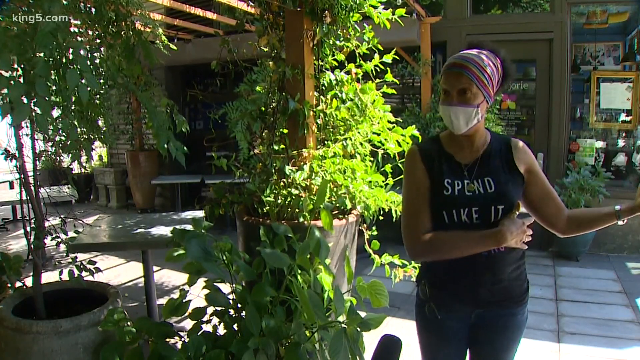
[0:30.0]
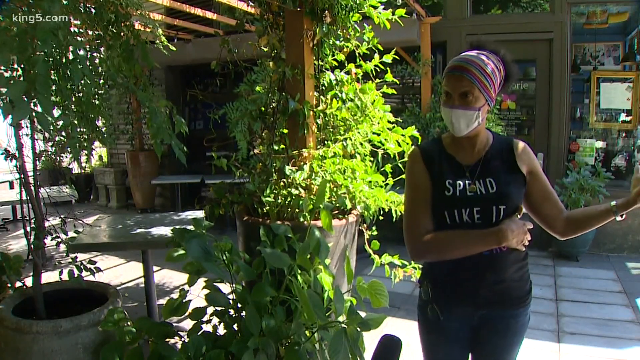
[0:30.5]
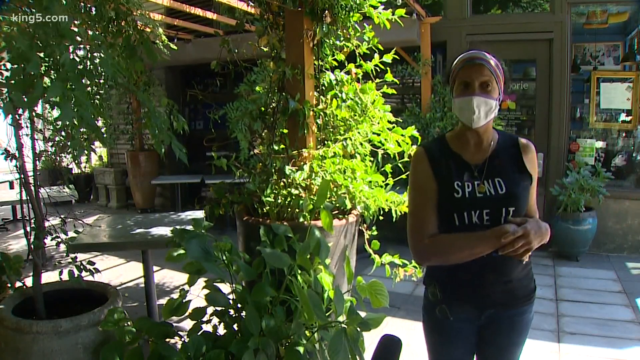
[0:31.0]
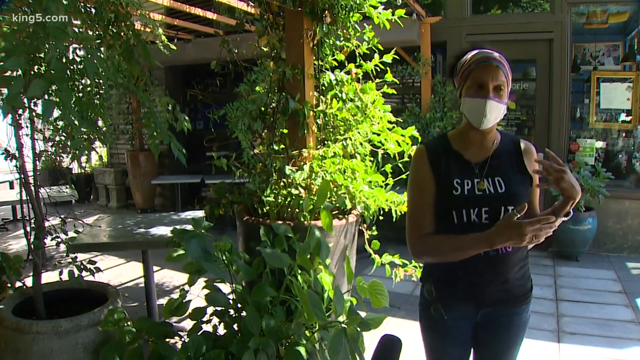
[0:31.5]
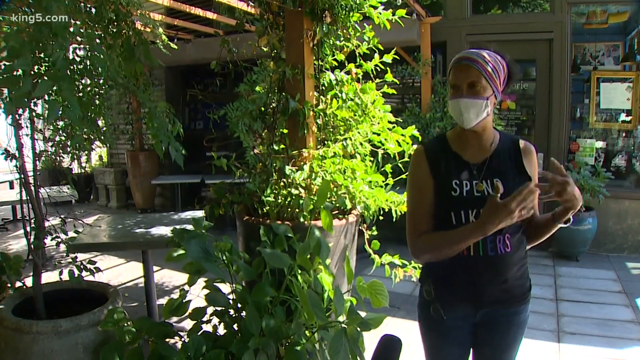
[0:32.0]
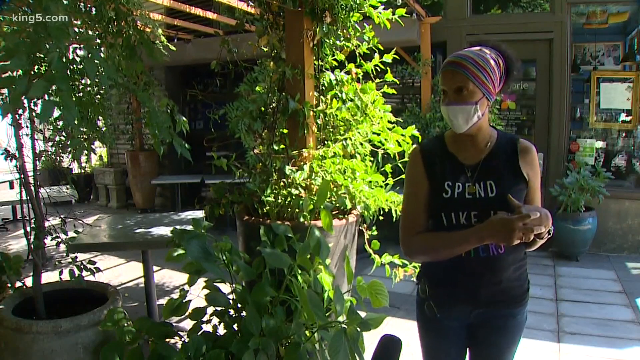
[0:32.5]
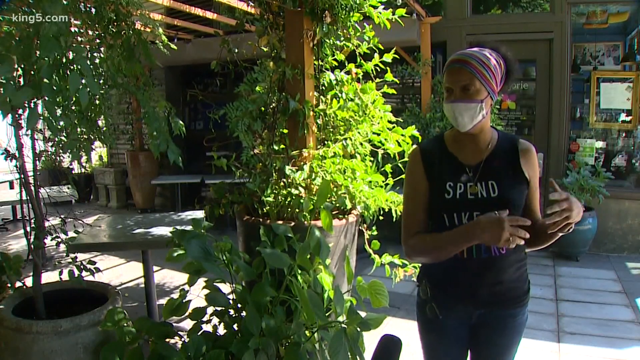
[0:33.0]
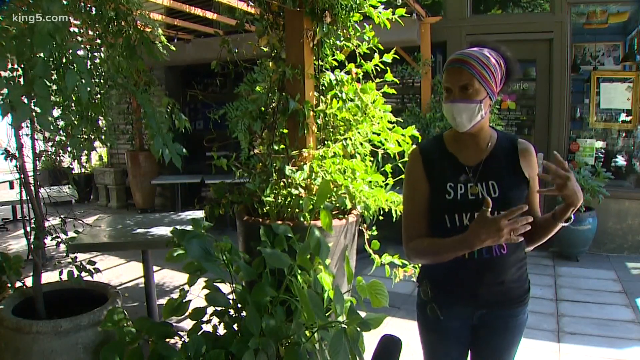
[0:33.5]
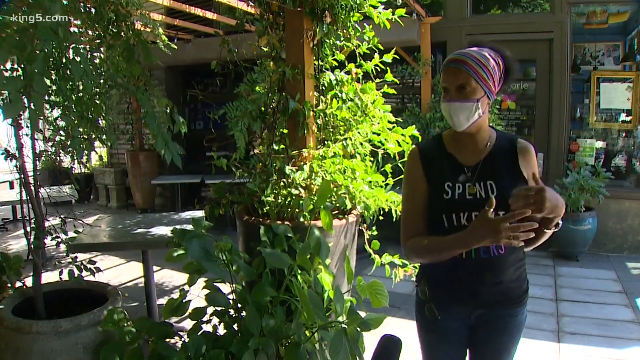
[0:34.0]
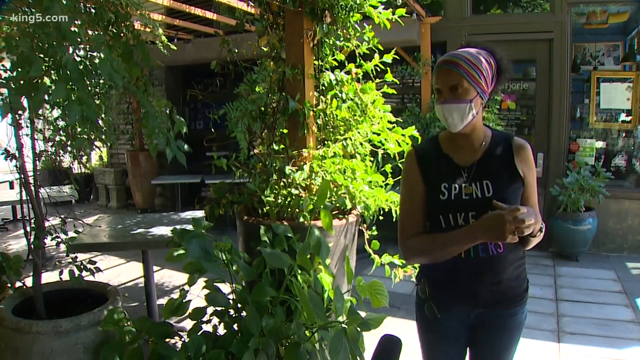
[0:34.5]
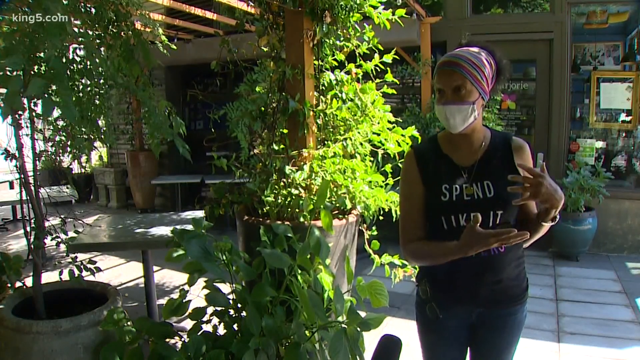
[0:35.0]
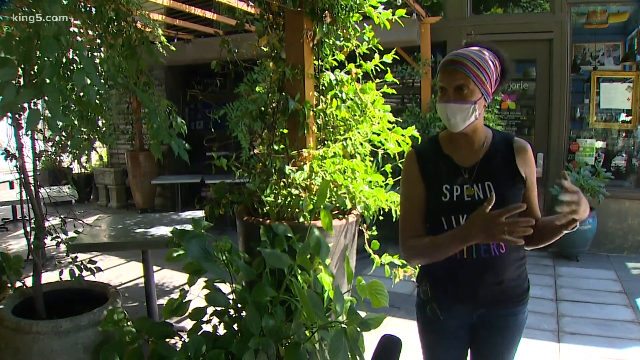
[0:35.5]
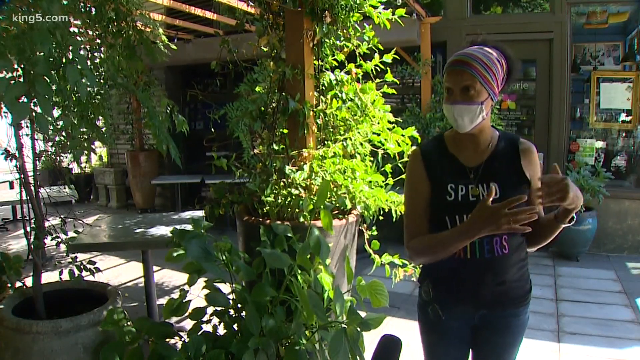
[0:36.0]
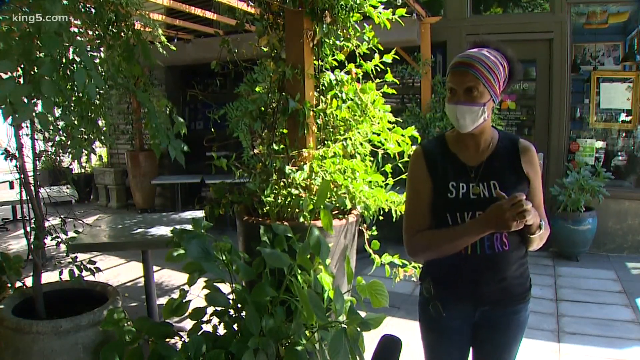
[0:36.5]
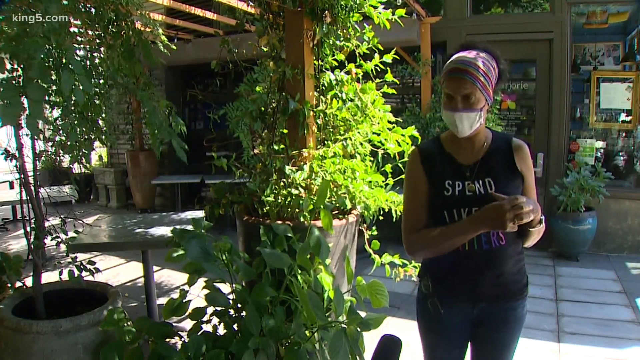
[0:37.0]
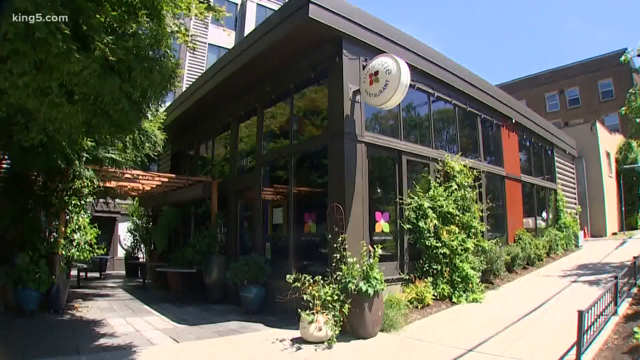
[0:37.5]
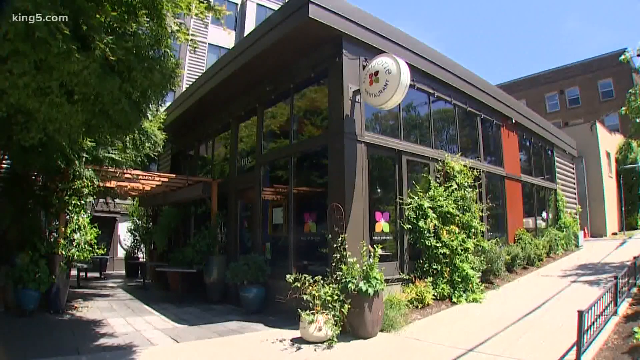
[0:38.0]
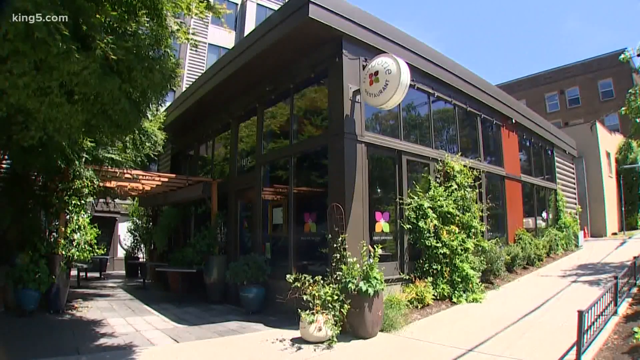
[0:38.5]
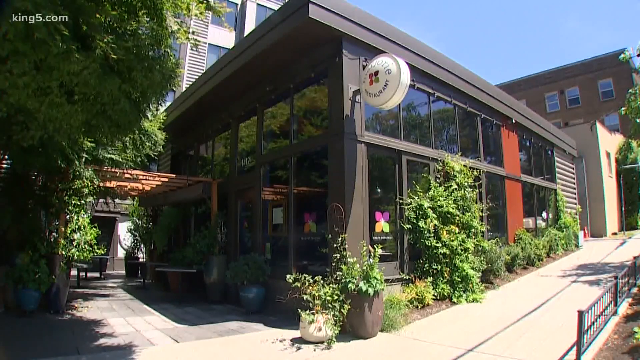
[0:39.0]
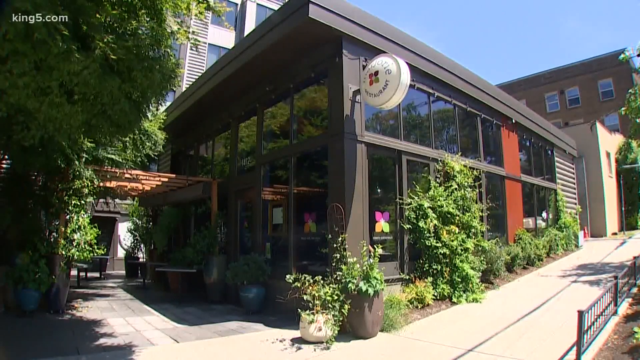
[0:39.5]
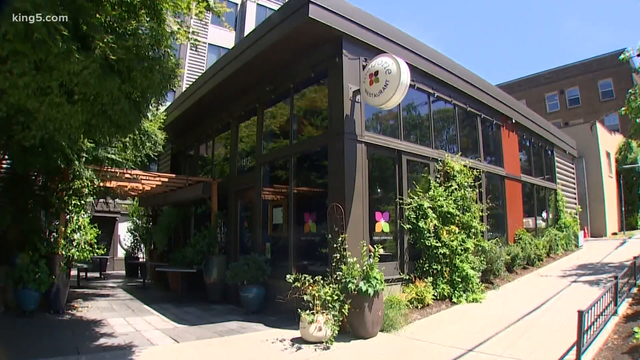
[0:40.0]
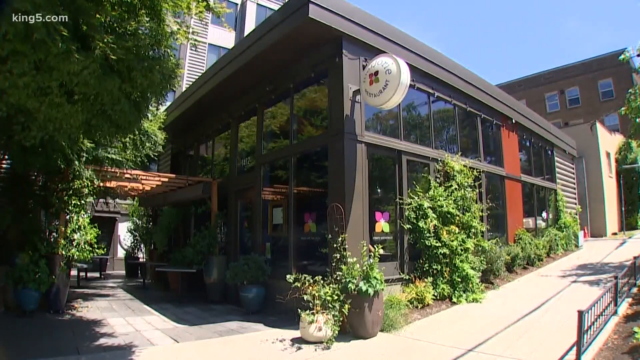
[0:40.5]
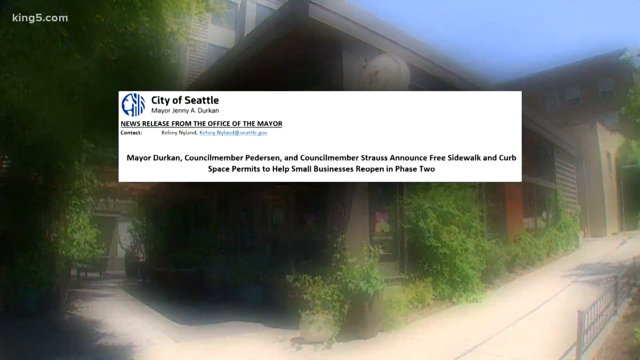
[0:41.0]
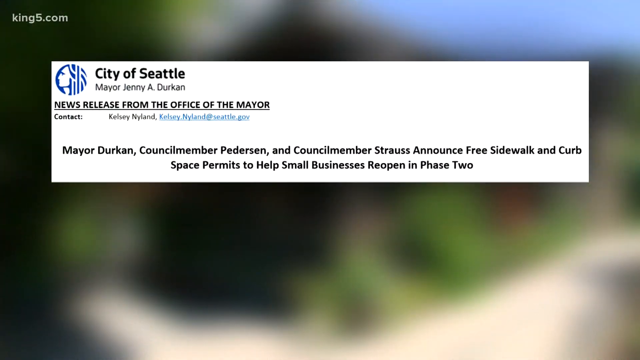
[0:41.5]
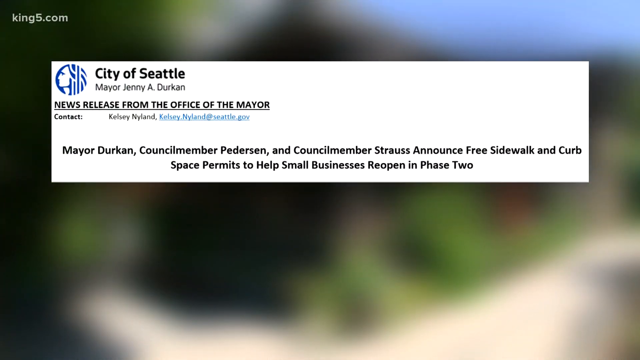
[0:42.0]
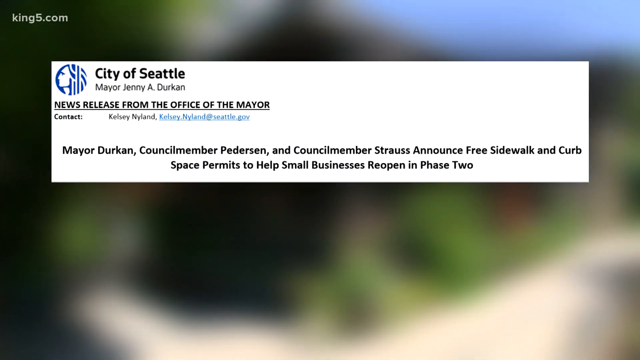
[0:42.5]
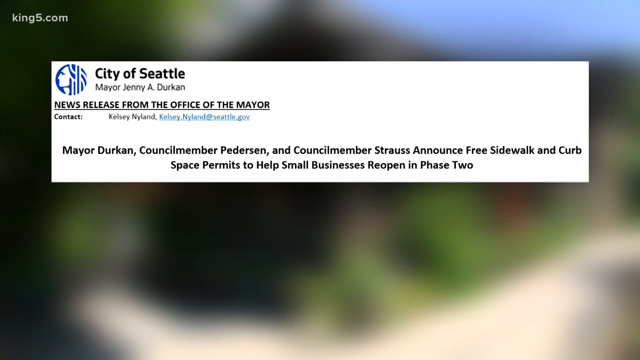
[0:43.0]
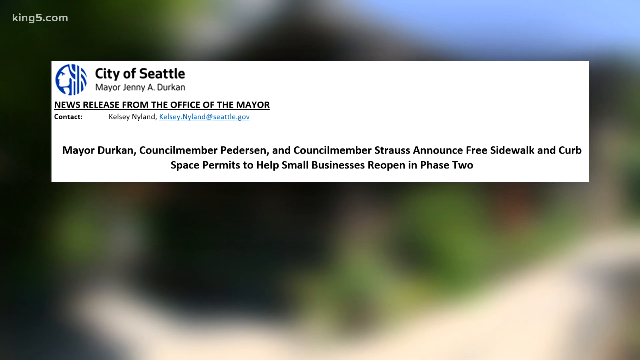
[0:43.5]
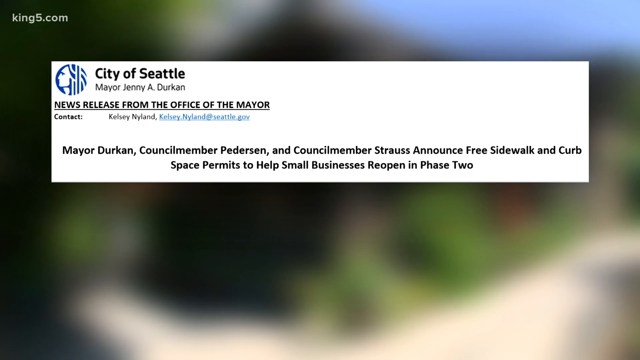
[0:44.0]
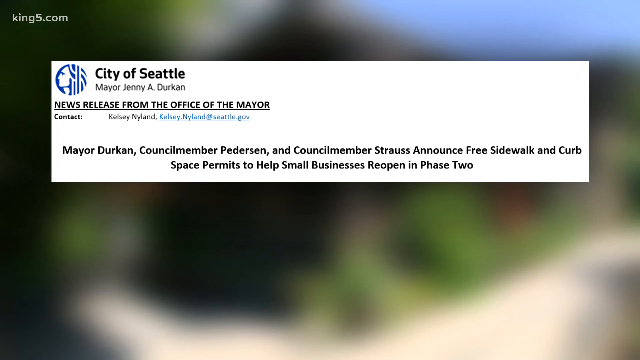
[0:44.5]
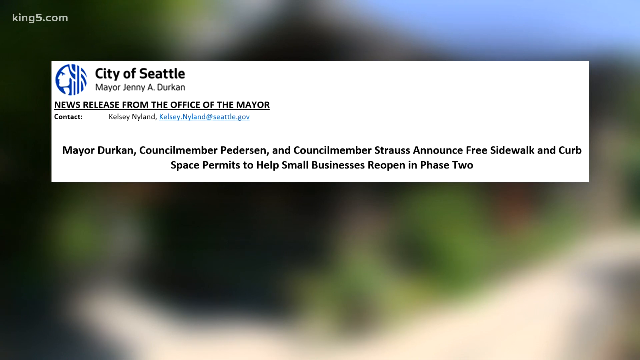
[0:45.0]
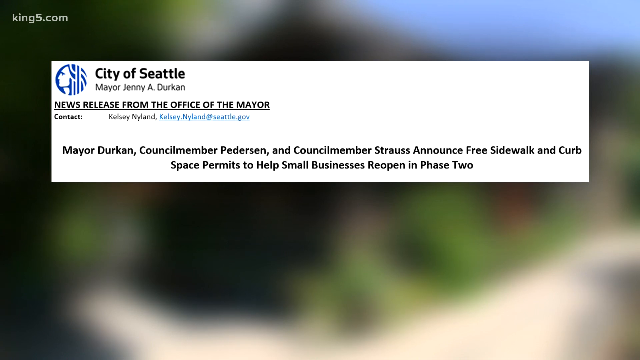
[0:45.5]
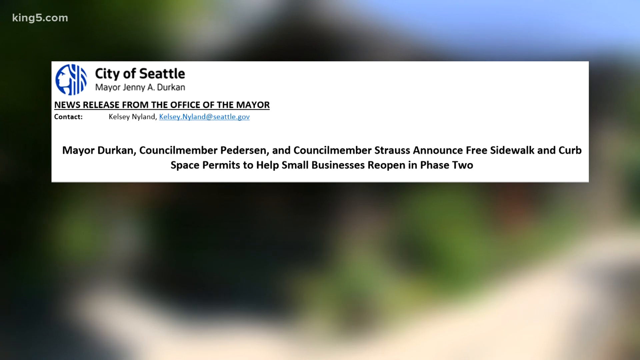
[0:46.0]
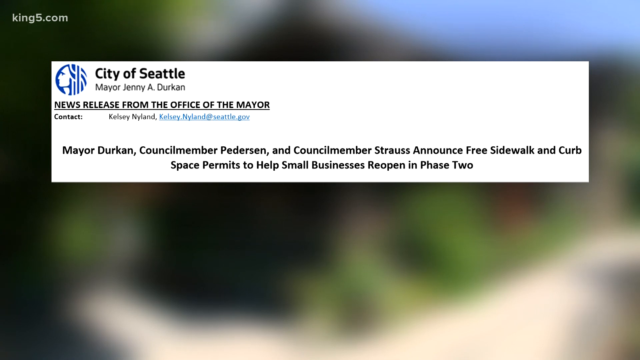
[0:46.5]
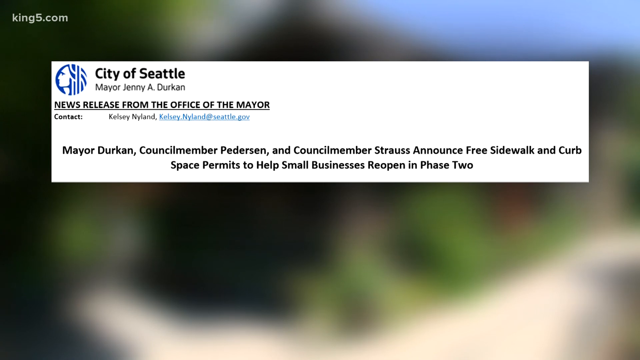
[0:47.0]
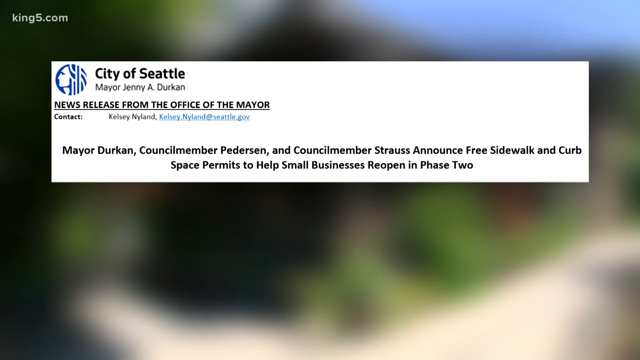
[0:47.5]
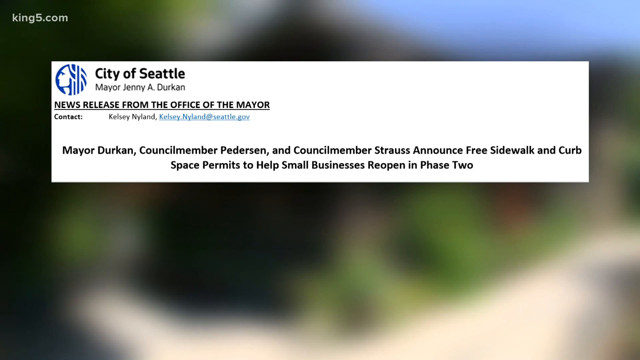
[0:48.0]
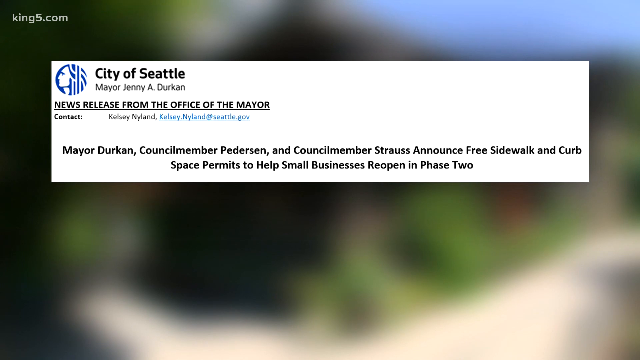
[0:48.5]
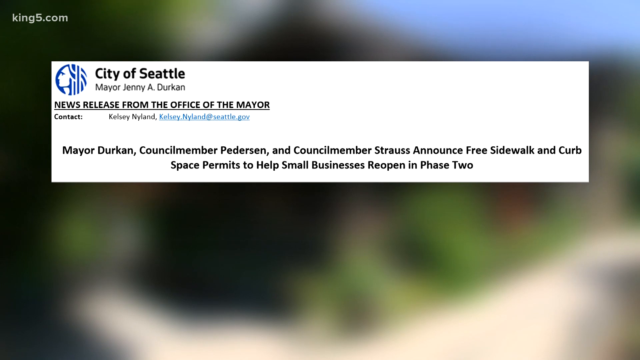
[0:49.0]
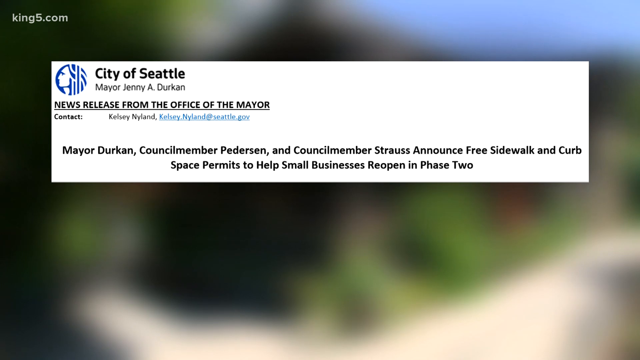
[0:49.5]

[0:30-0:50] A woman appears to be interviewing another woman outdoors at Marjorie restaurant. The patio tables have no chairs yet. Text then appears reading "City of Seattle" and "news release from the office of the mayor," followed by "mayor Durkin, councilmember Pedersen and councilmember Strauss announced free sidewalk and curb space permits to help small businesses reopen in phase two."